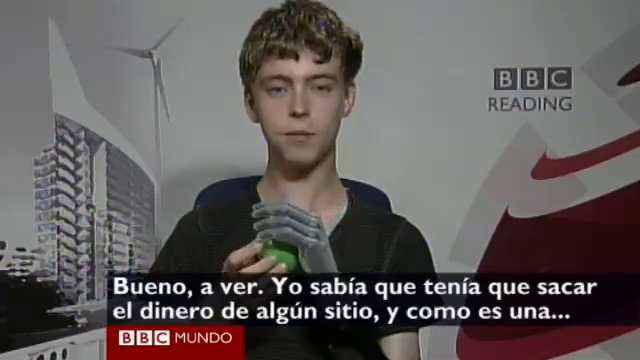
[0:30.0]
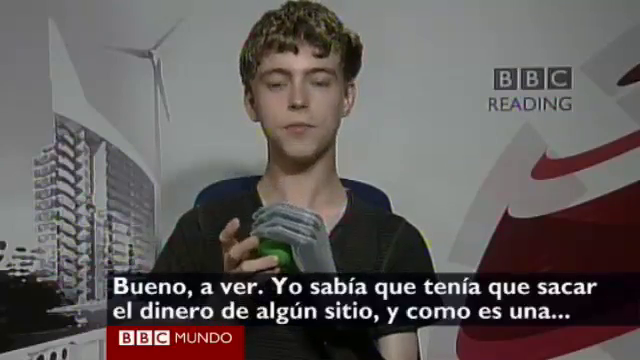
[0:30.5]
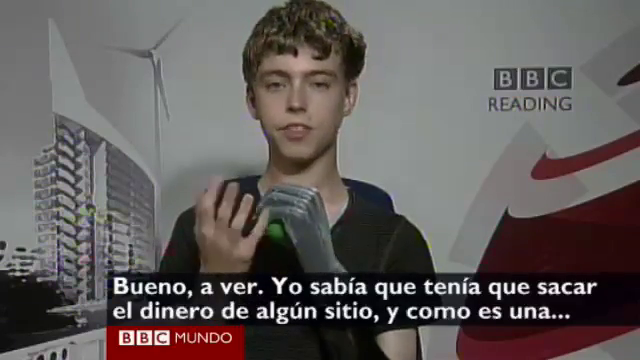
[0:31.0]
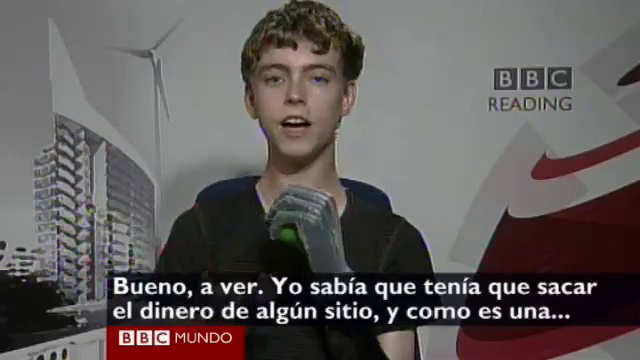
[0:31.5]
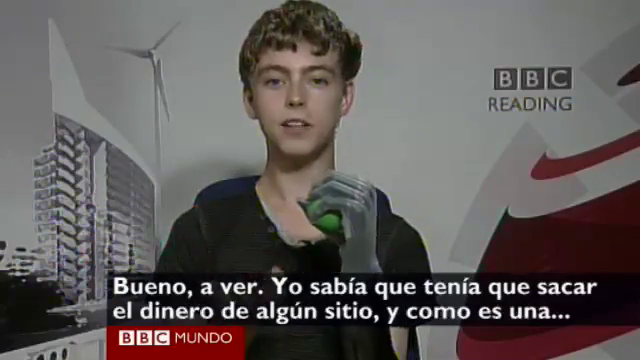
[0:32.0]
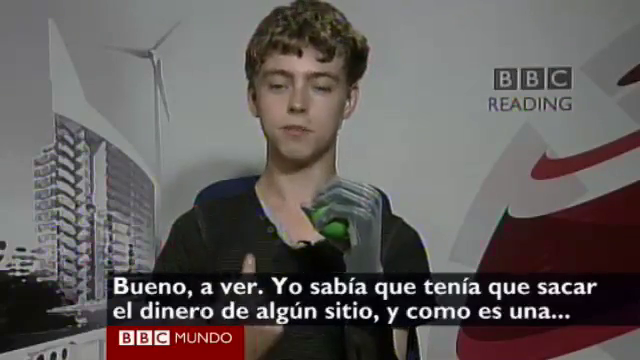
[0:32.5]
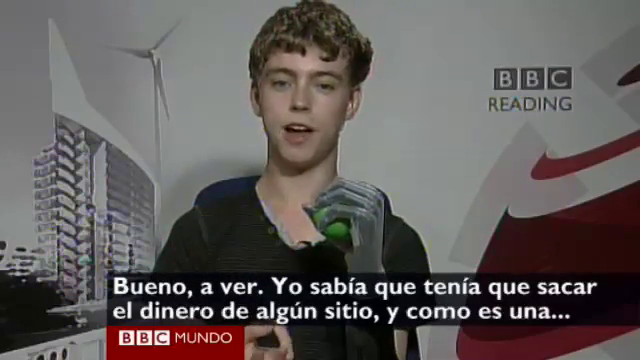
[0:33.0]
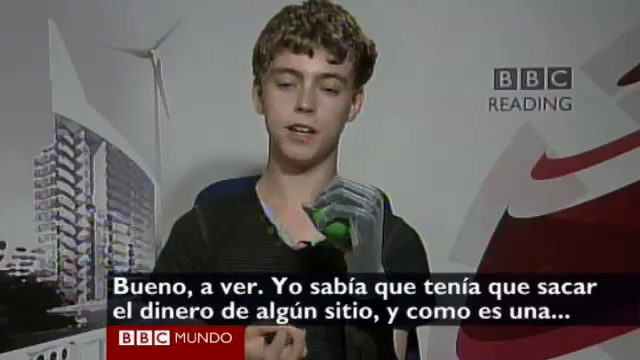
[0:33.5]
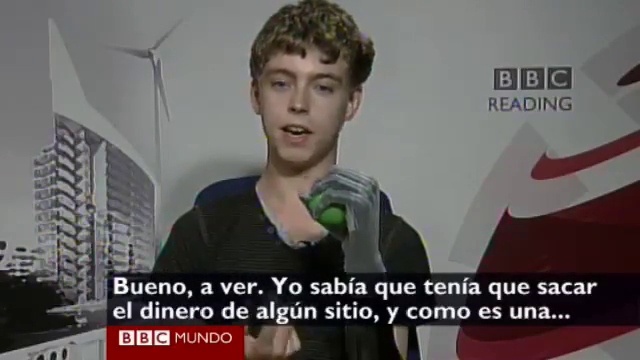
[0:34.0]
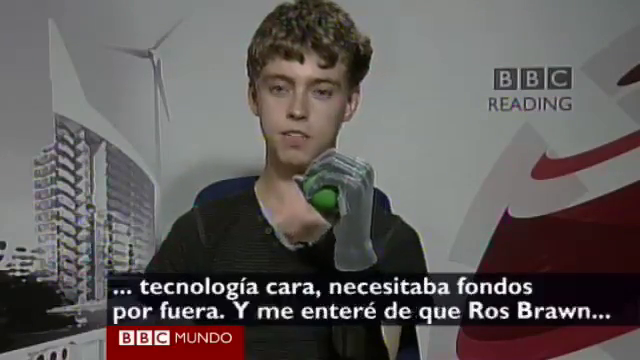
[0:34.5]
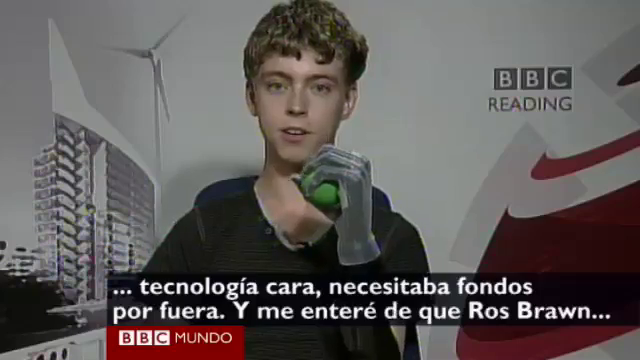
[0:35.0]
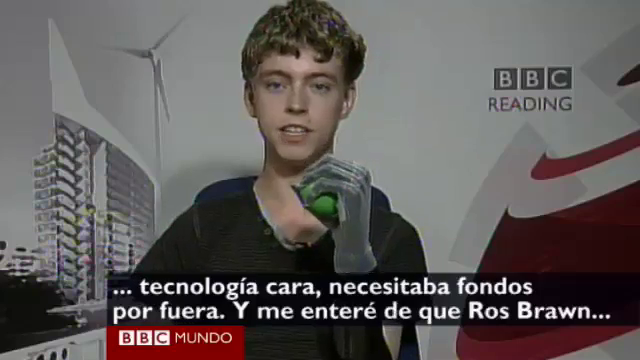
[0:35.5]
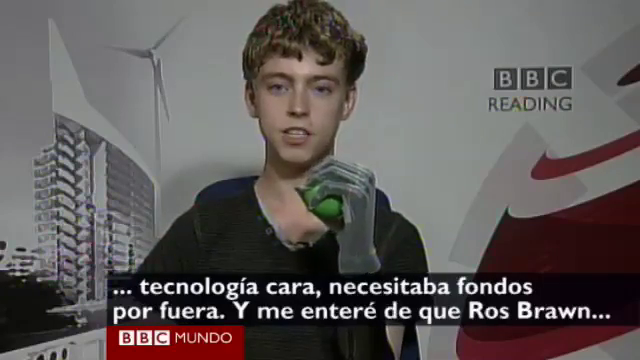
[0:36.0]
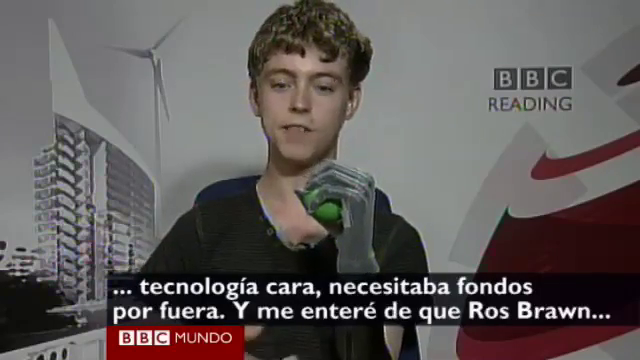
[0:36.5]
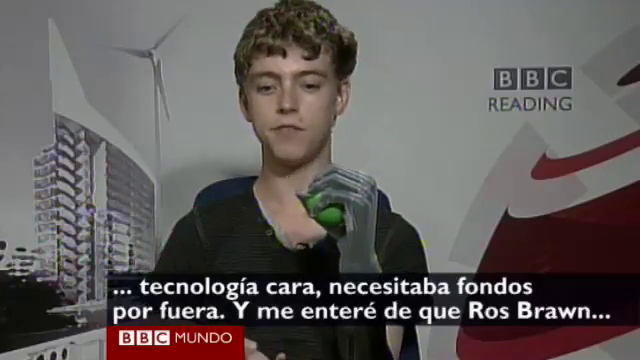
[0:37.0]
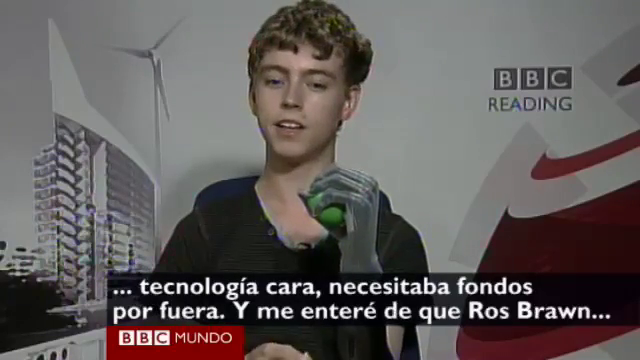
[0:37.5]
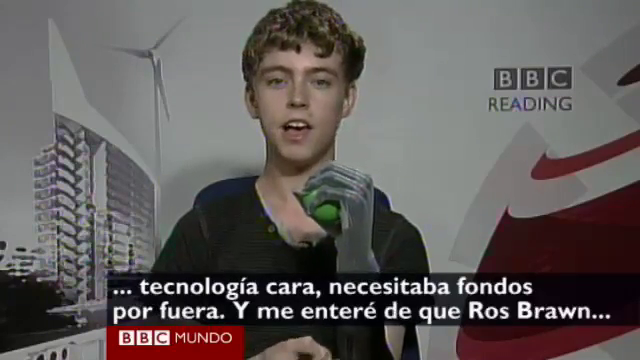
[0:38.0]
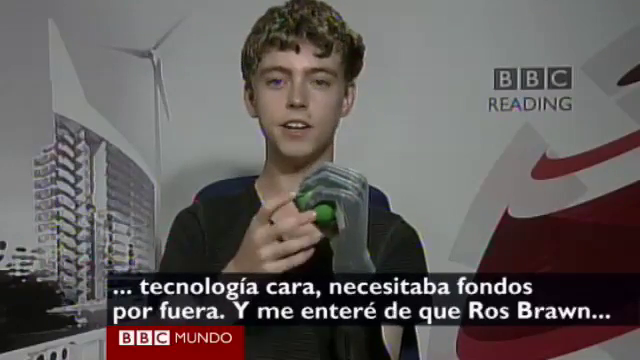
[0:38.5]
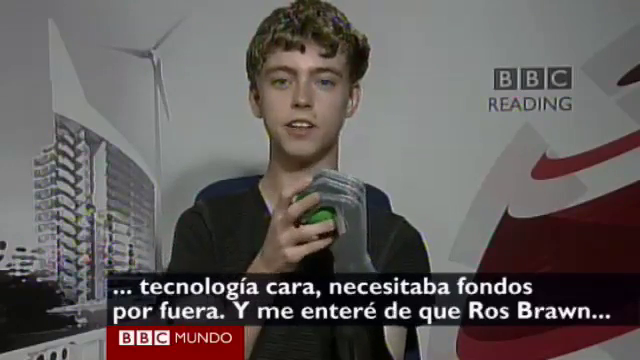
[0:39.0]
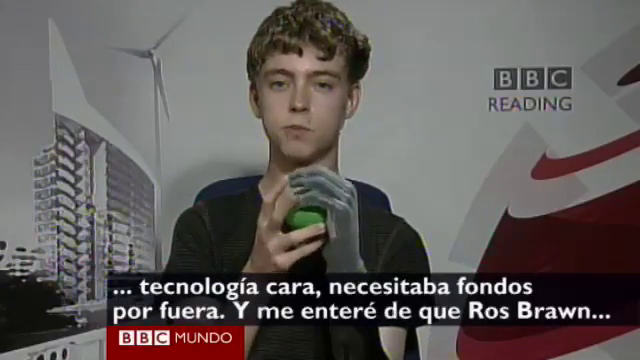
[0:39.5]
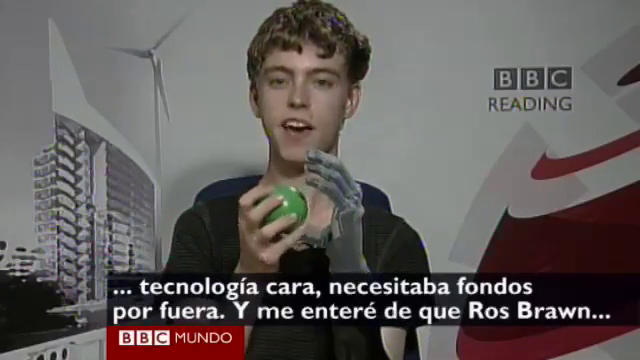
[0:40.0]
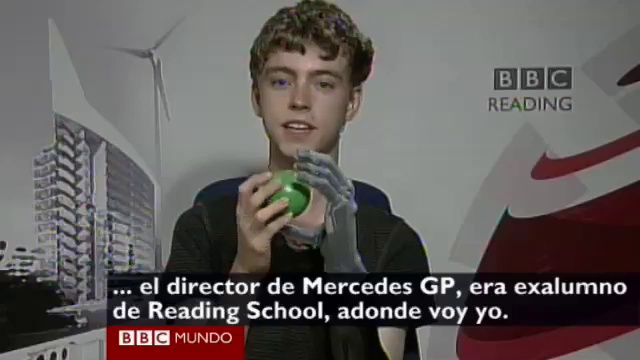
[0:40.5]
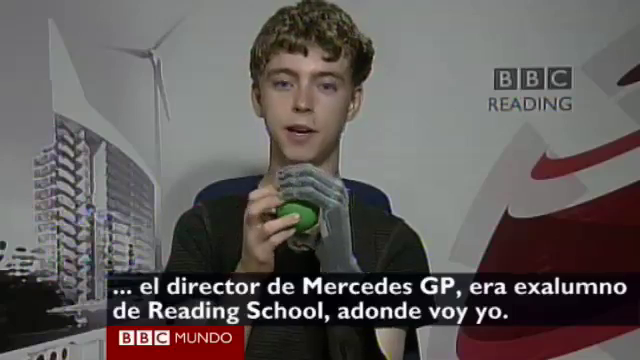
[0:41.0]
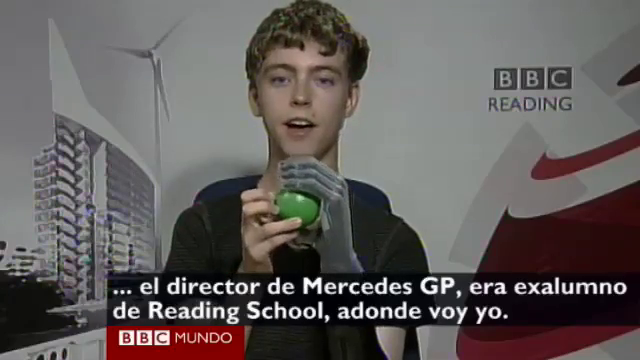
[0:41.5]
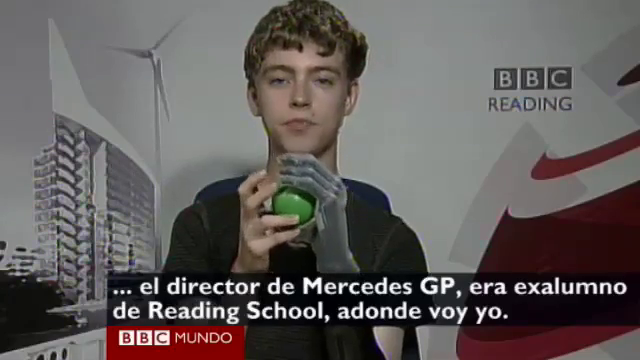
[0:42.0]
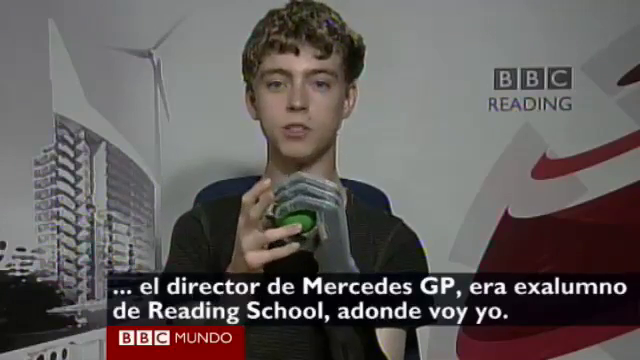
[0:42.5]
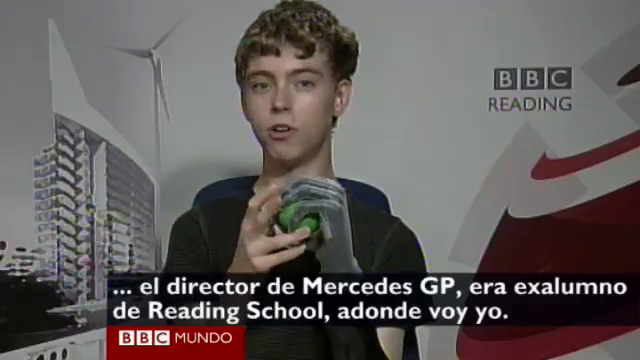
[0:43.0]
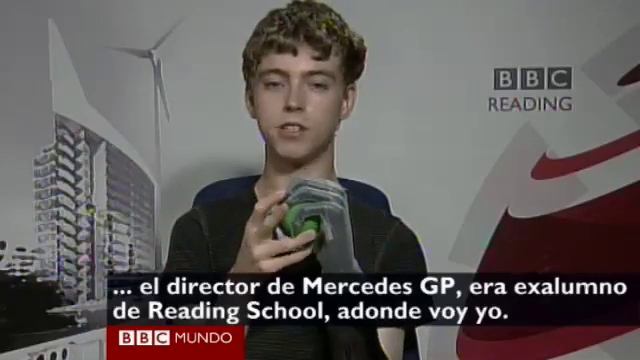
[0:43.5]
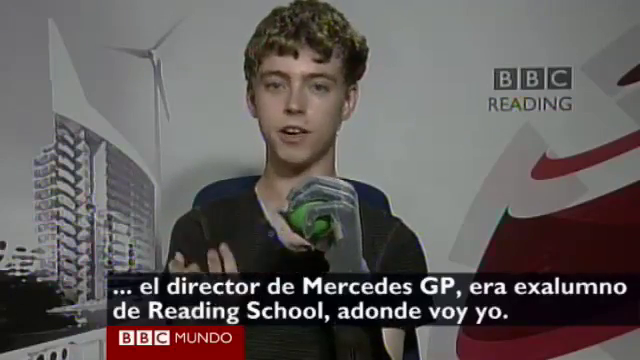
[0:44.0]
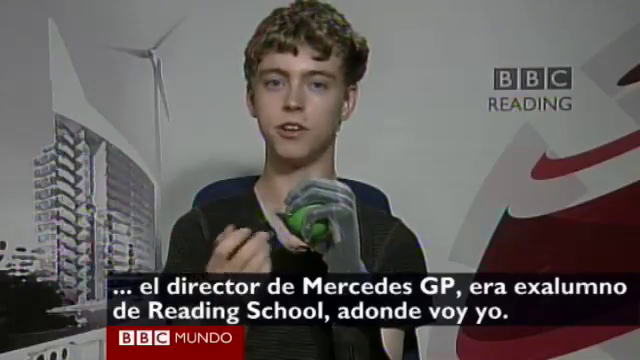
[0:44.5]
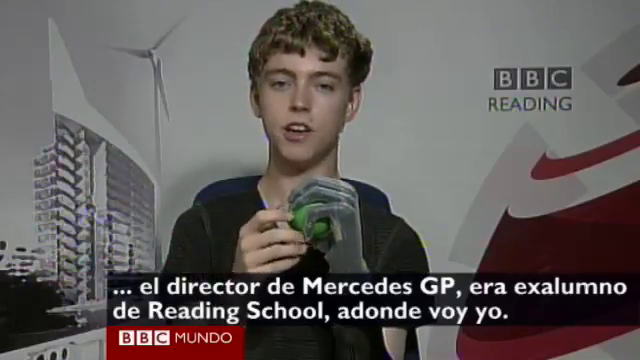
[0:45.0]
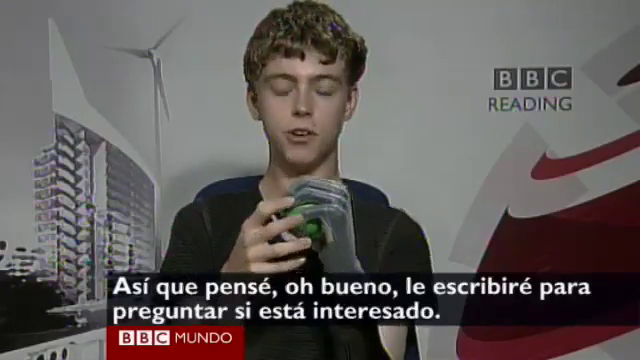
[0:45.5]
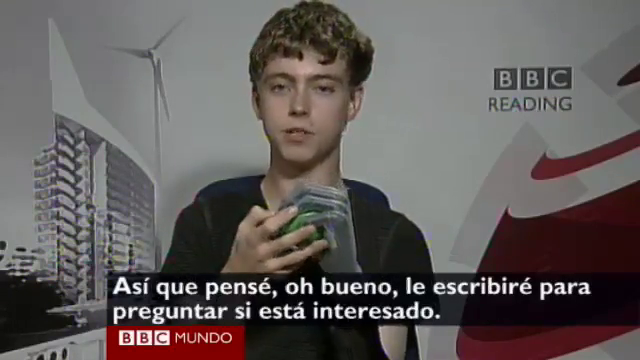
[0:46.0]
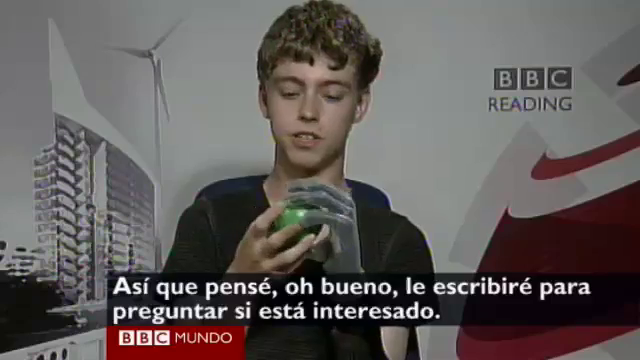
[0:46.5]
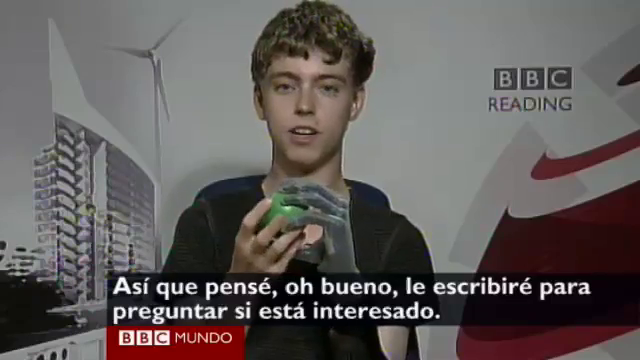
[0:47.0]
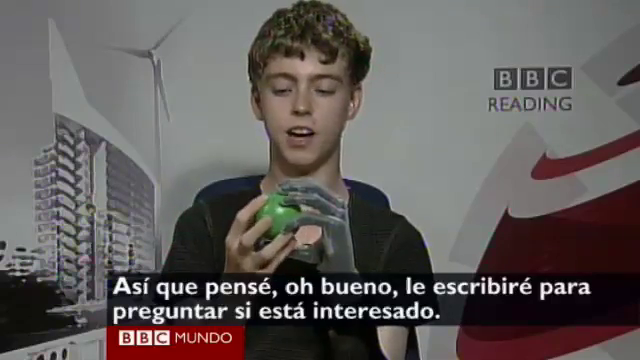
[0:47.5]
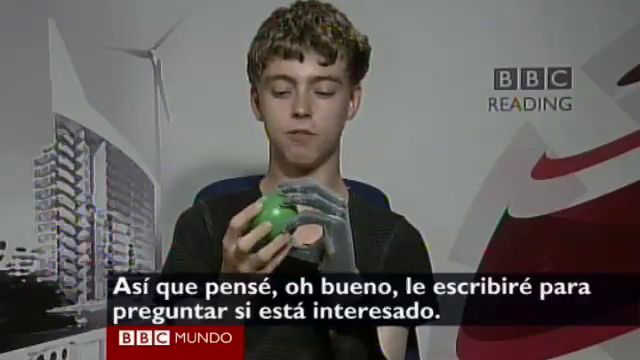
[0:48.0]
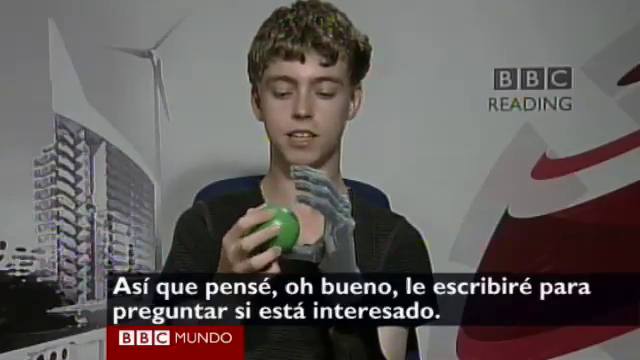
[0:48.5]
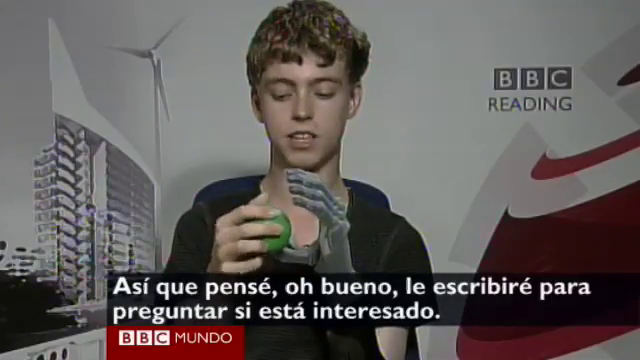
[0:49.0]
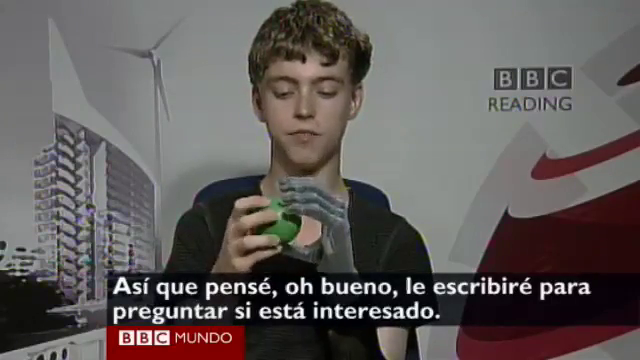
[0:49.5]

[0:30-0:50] The boy with the dark shirt, mechanical left hand and curly auburn hair looks at the camera at first, his mechanical left hand raised above his right hand. In the background is either a window or possibly a picture of a building or an icon. Captioning below is apparently in Spanish. He holds a green ball in his mechanical left hand and gestures upward with his right hand while continuing to speak. He keeps gripping the ball and talking, holding it up. He then takes the ball with his right hand, opening his left hand to release it. He has a neutral to slightly positive expression. He grips the ball with both hands, takes it with his right, and puts it back in his left, seemingly demonstrating how to grip with a mechanical hand. The background is a white wall with red and white icons, with the BBC Reading logo in the upper right. Captioning that is apparently in Spanish continues across the bottom in white lettering on a translucent black background.